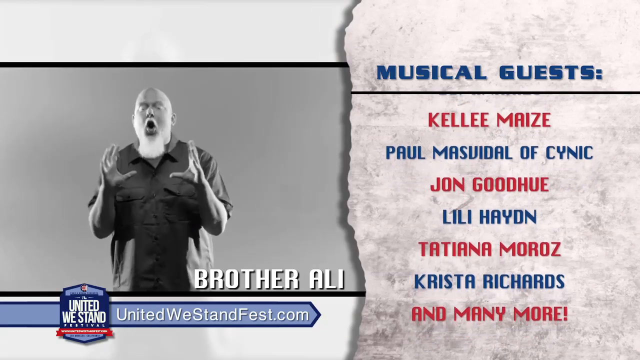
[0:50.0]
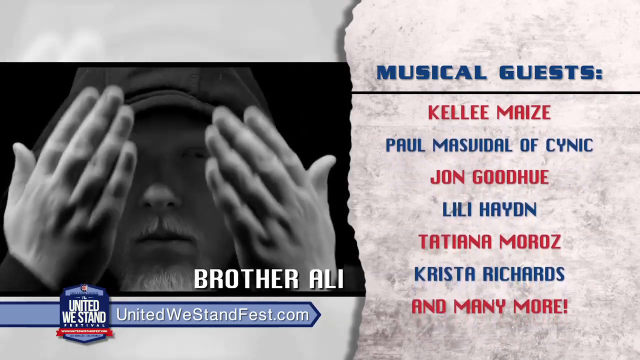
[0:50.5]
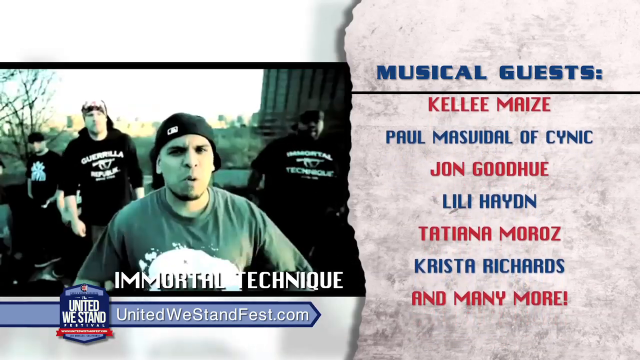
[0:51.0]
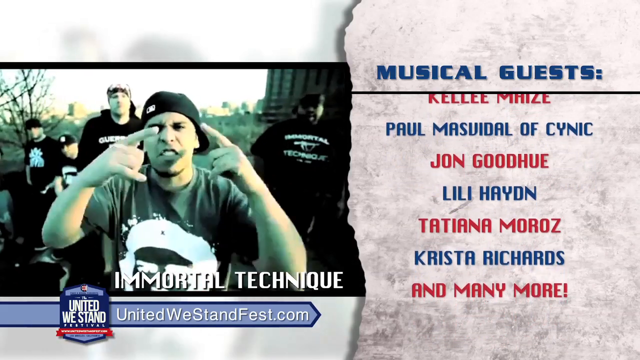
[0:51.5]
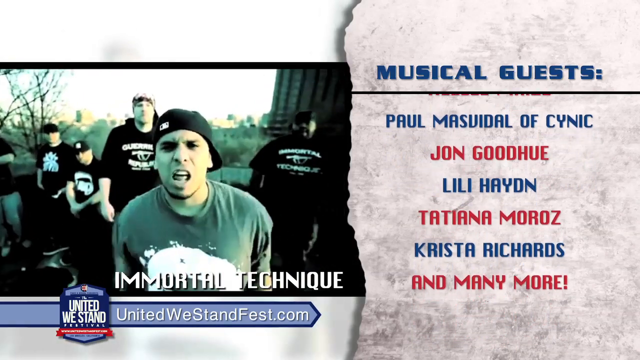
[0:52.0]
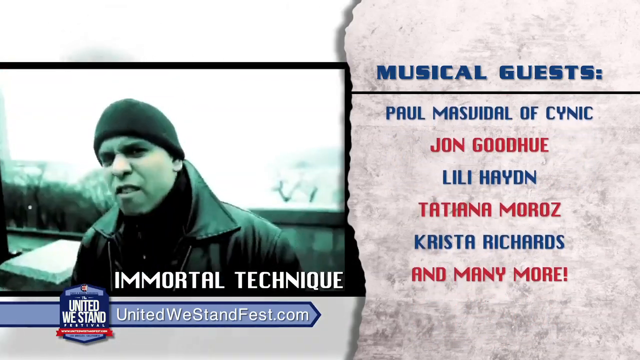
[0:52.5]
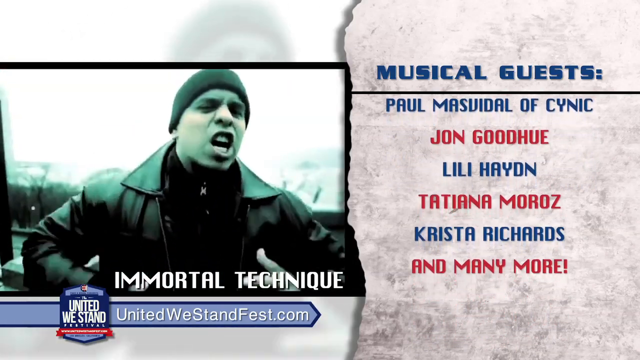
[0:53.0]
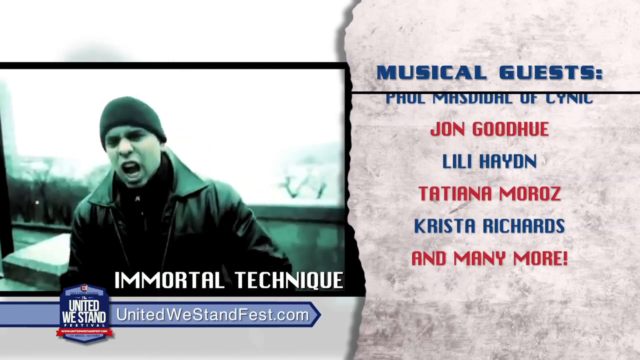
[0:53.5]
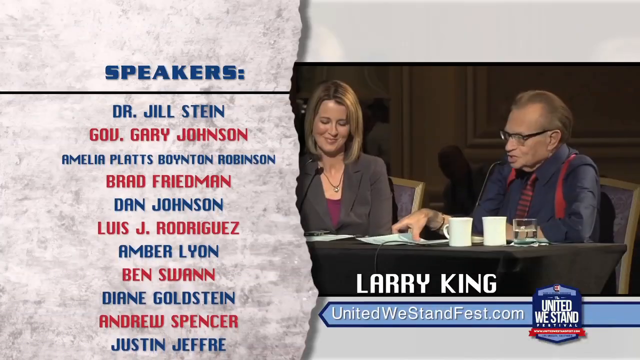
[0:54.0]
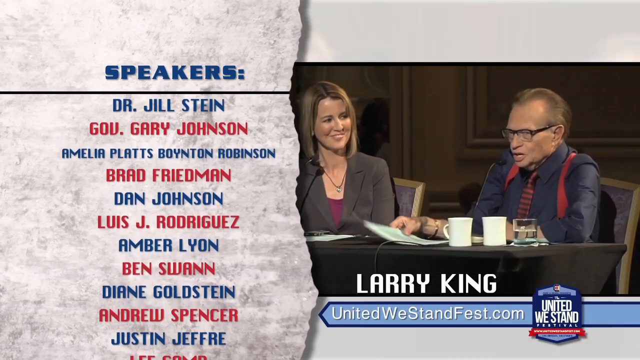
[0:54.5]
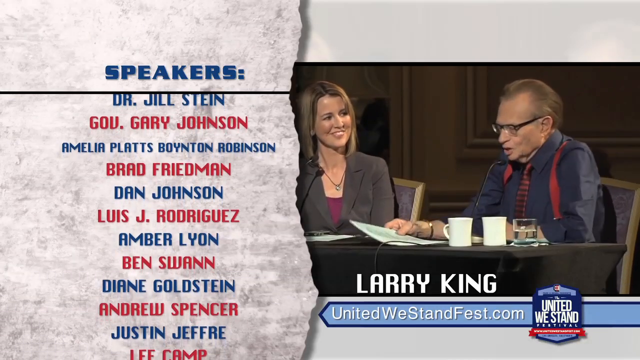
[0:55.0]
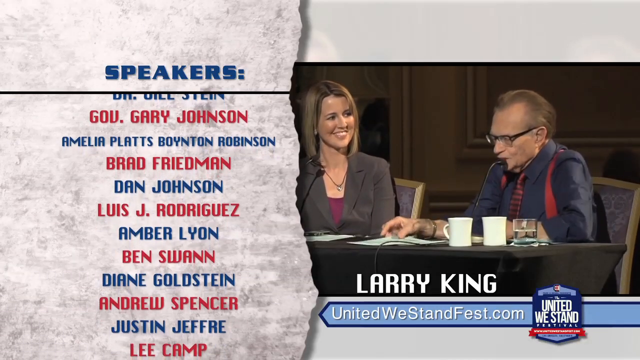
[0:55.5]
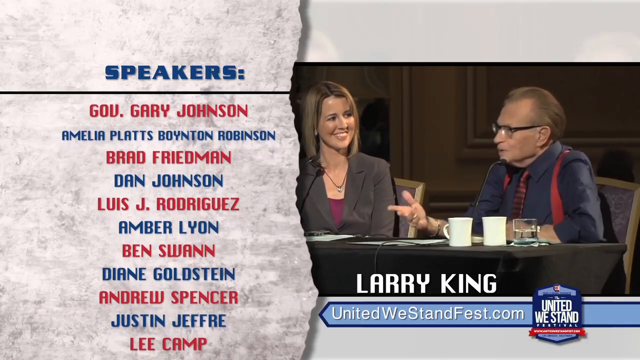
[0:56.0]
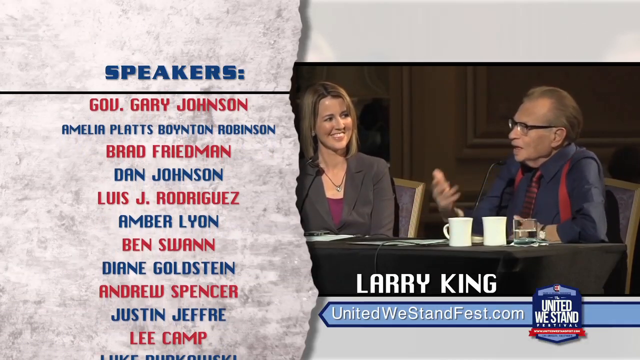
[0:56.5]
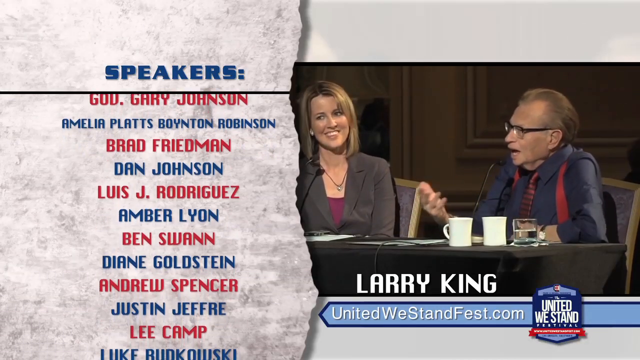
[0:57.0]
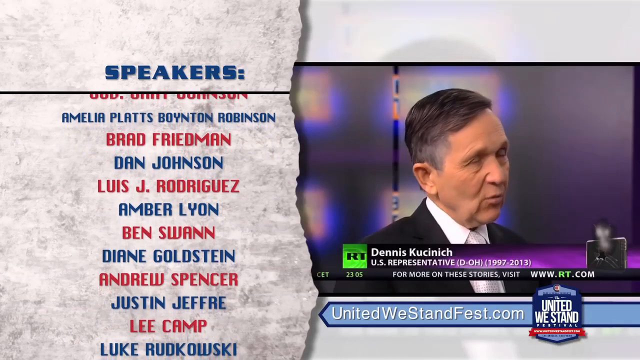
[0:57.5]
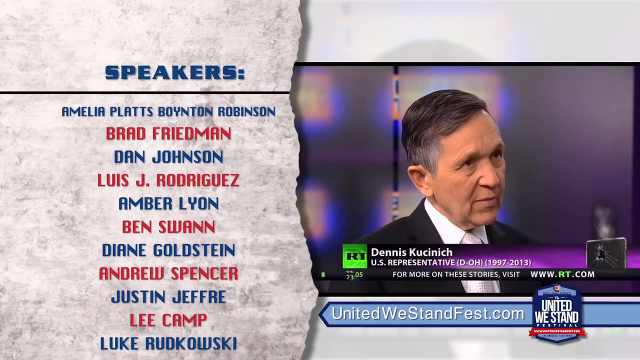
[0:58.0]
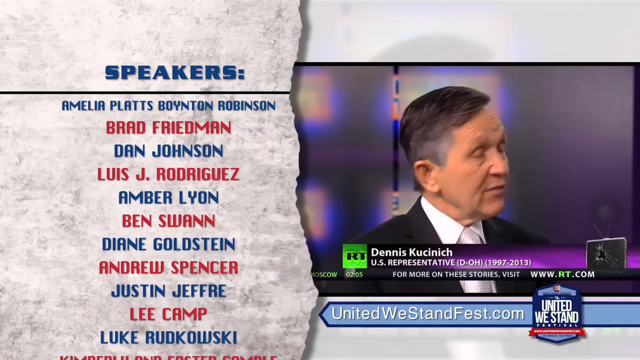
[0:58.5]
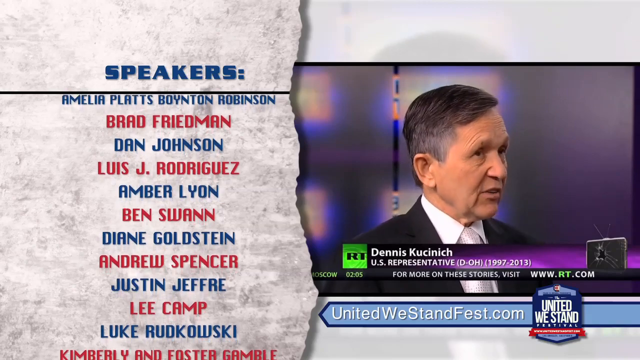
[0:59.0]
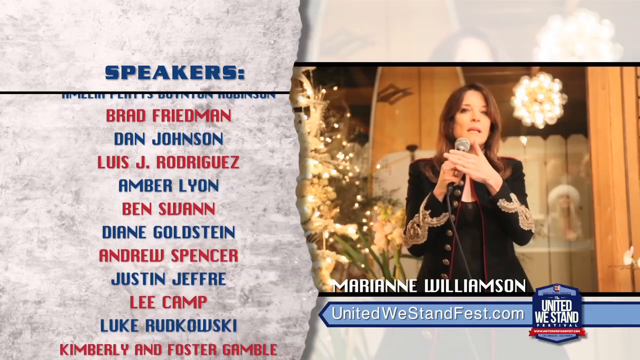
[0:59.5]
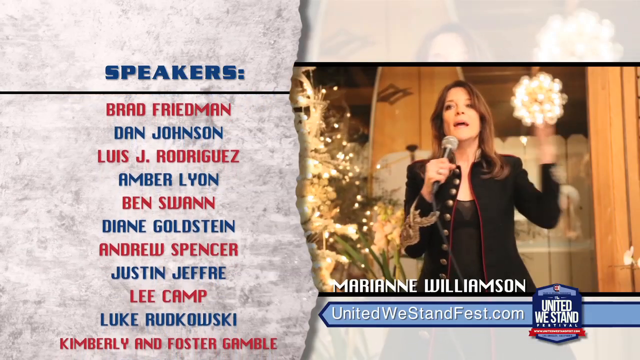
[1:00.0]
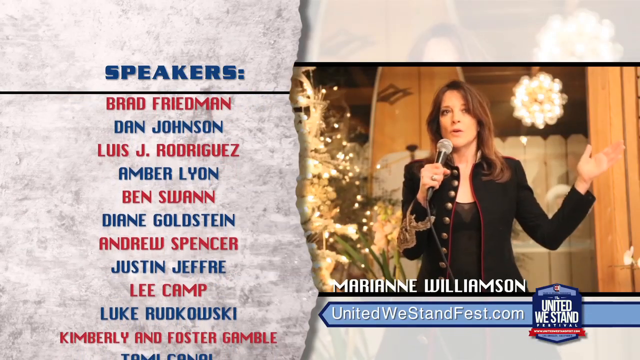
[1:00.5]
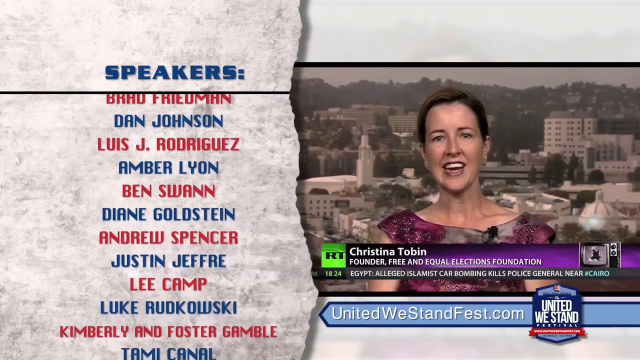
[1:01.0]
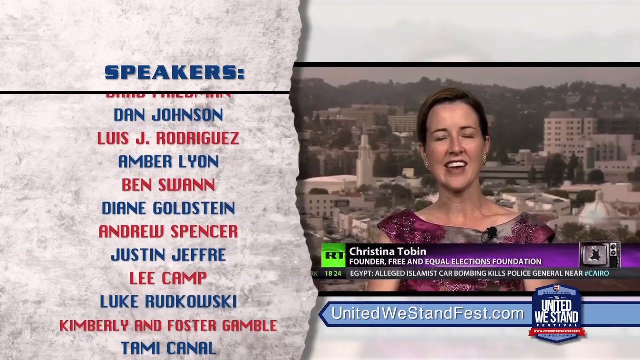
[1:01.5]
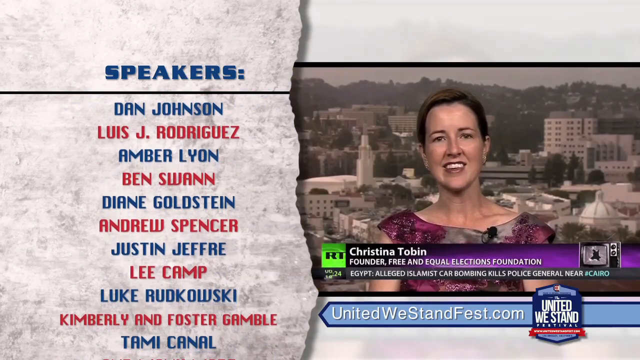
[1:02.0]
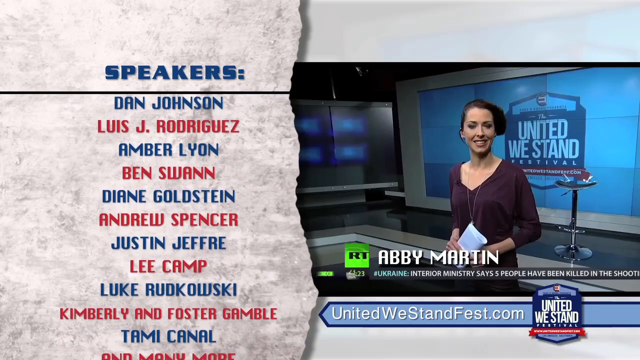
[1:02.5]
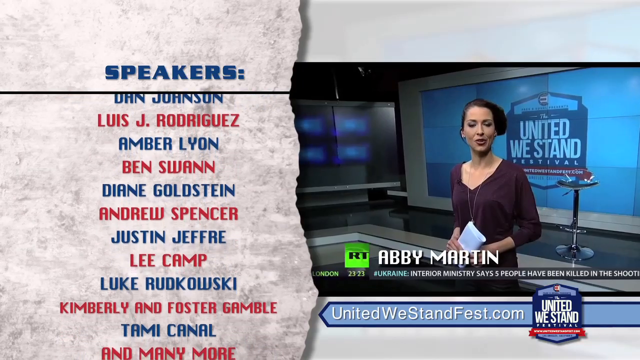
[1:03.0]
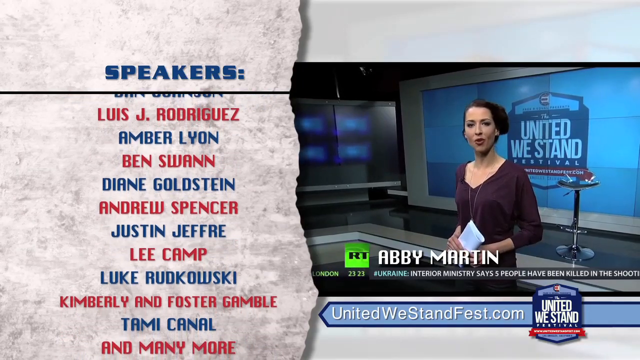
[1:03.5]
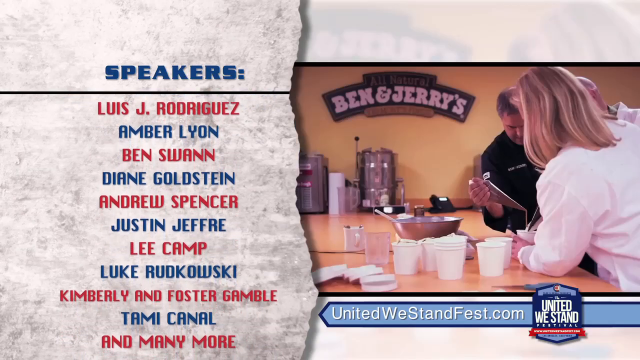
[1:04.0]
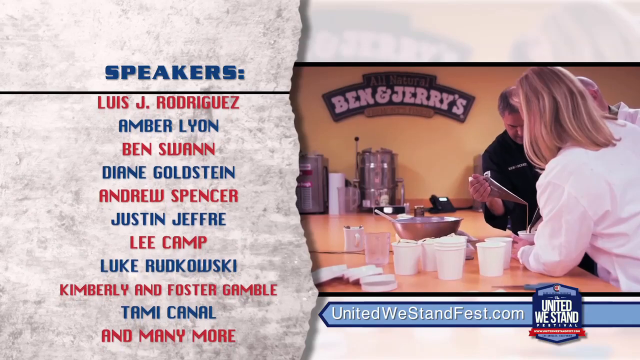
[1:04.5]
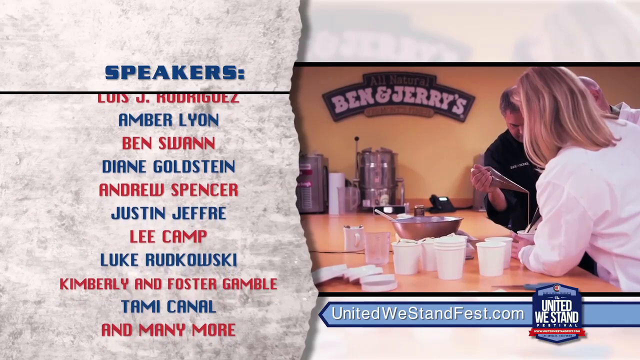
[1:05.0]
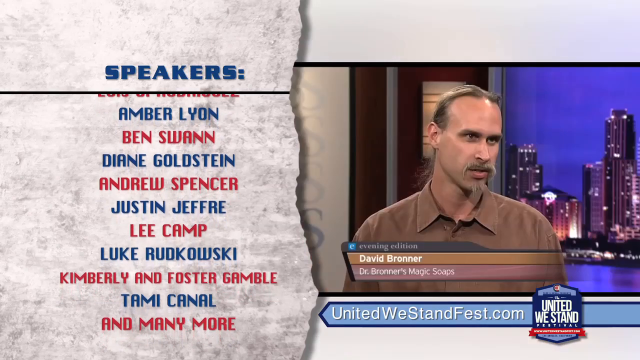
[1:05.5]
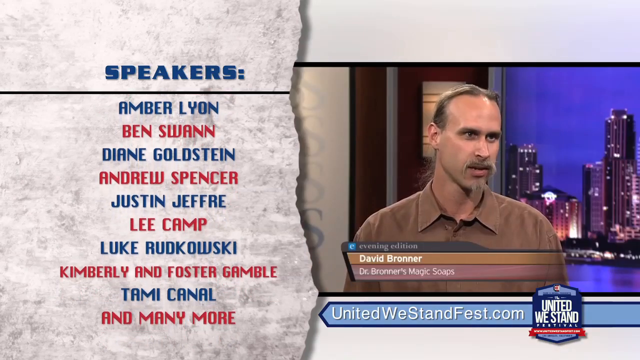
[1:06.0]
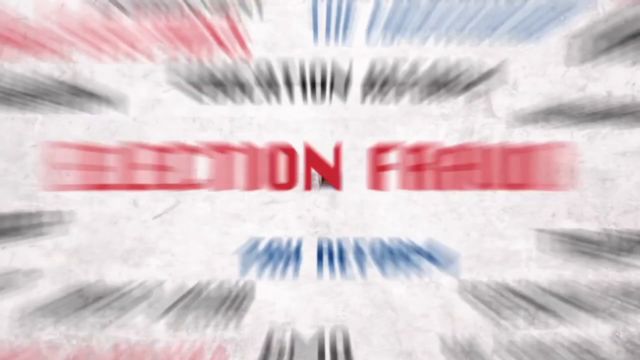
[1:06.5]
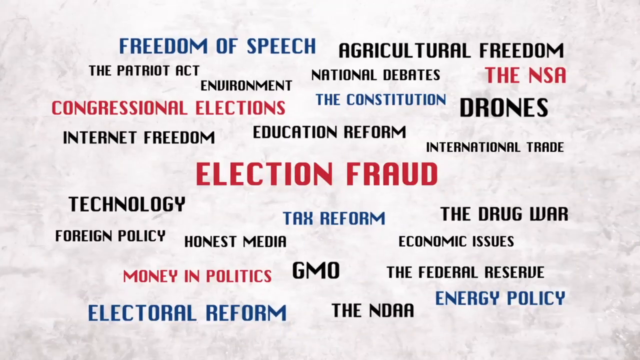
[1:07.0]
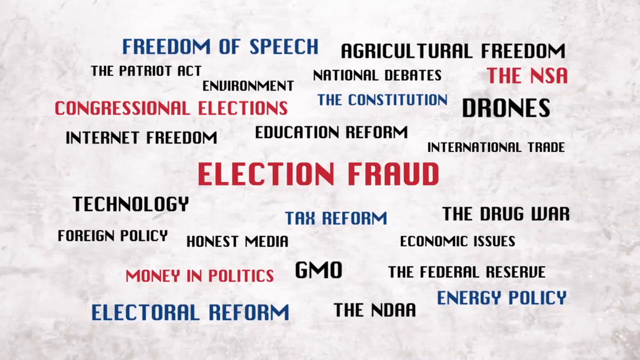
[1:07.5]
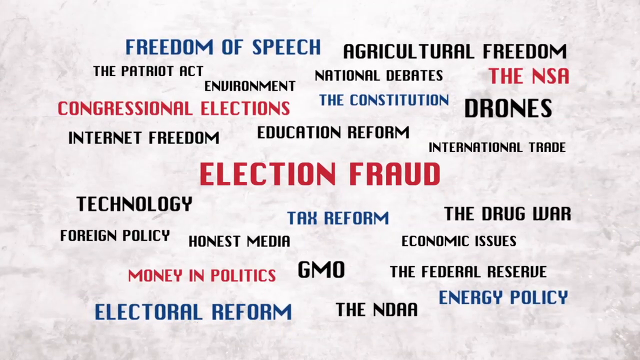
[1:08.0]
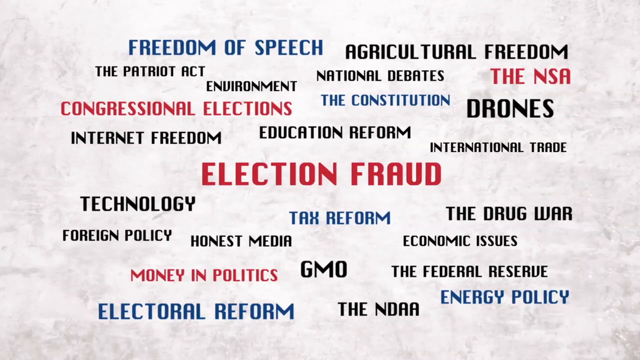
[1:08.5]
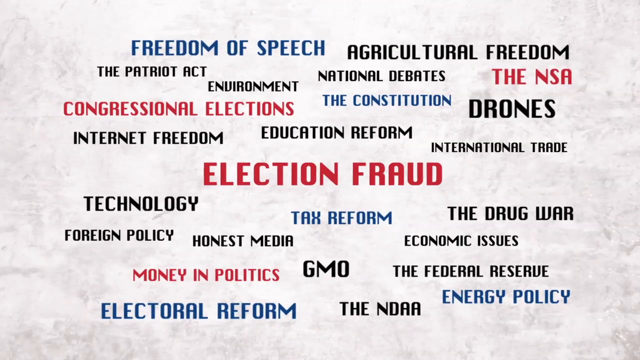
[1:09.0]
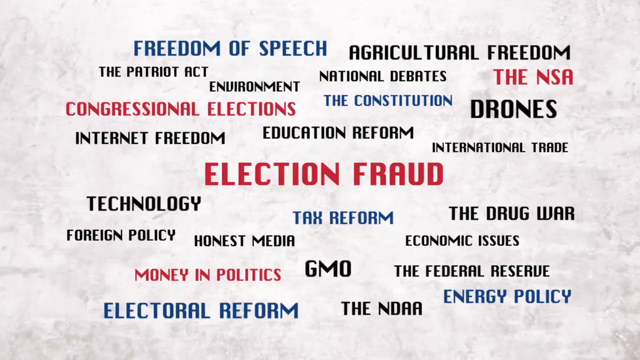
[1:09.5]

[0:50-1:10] "United we stand" is shown, and the video indicates a very big festival on May 10th. Musical guests are featured, including a singer called Immortal. "More choices, free and equal elections" appears.